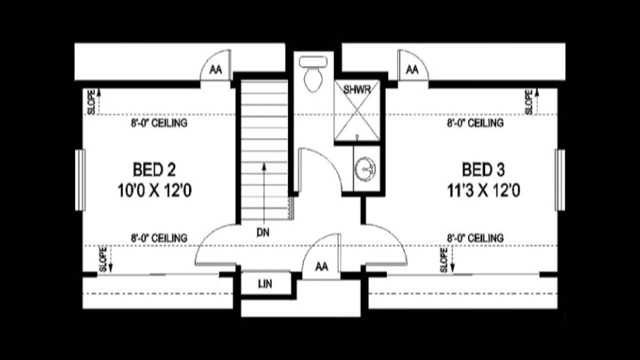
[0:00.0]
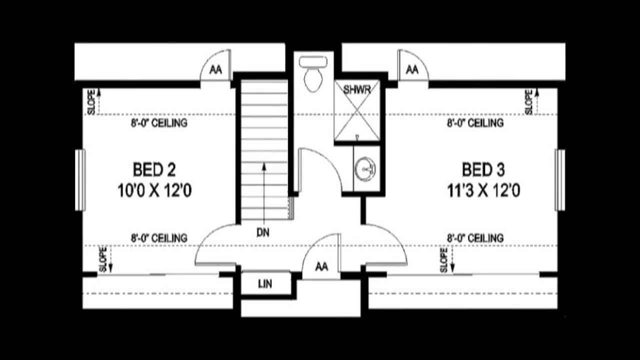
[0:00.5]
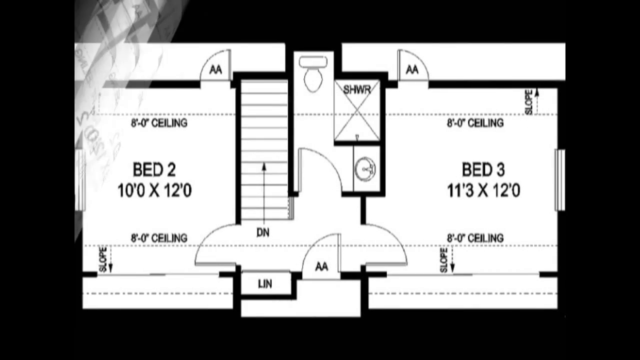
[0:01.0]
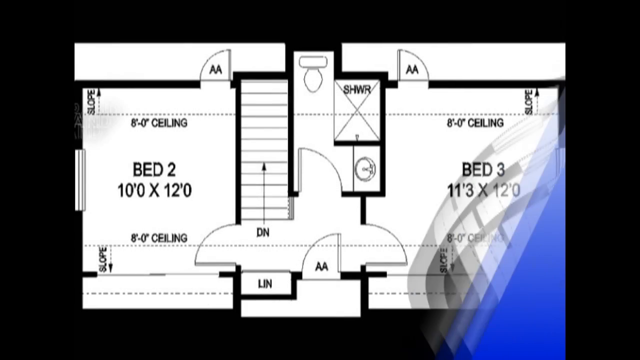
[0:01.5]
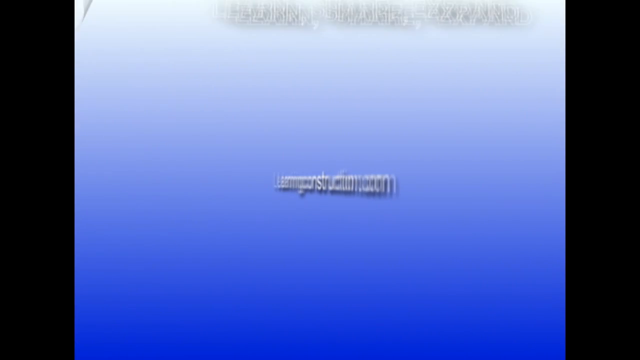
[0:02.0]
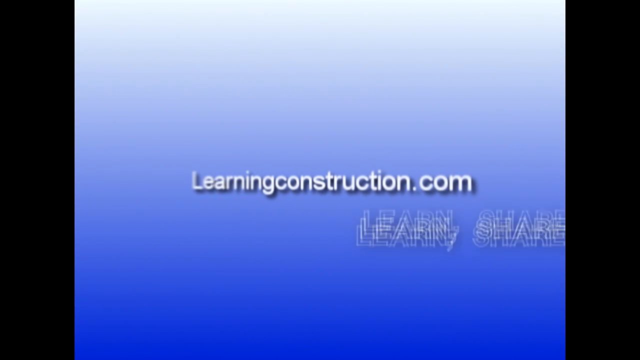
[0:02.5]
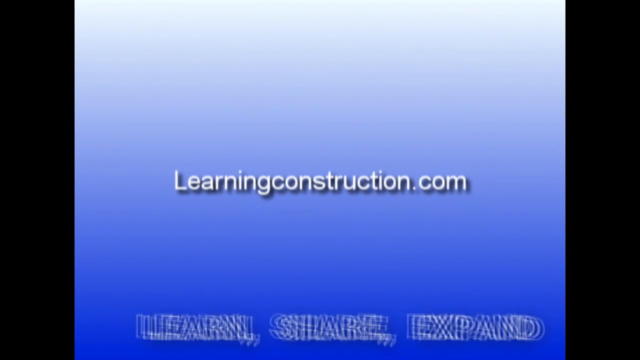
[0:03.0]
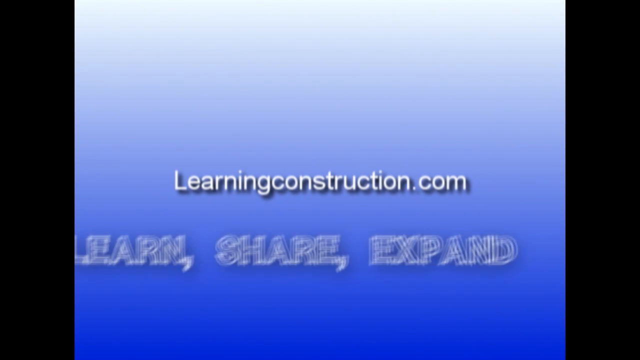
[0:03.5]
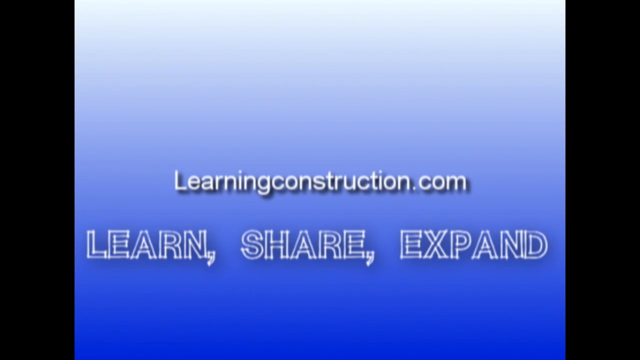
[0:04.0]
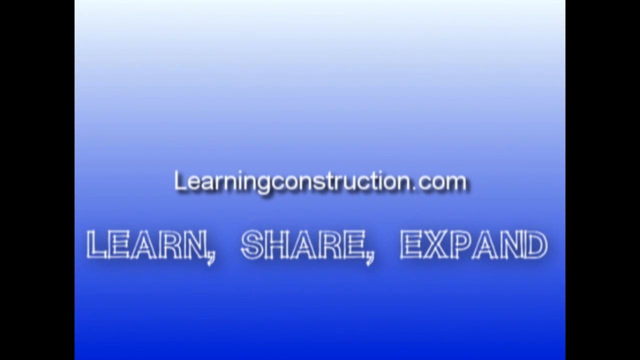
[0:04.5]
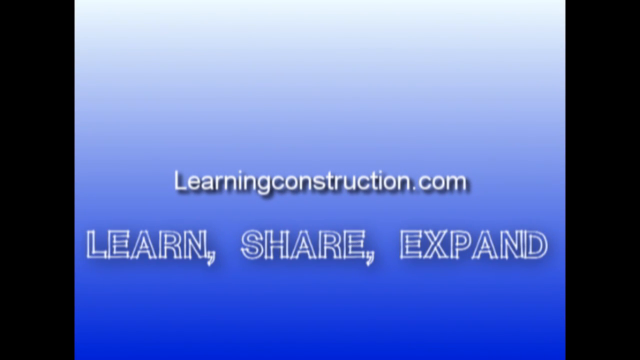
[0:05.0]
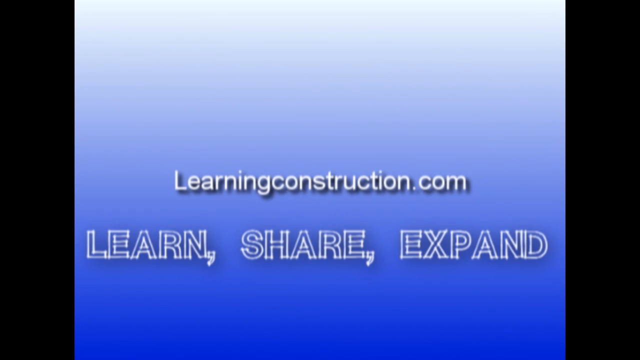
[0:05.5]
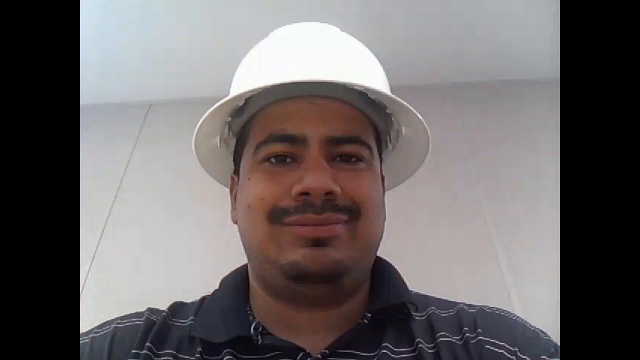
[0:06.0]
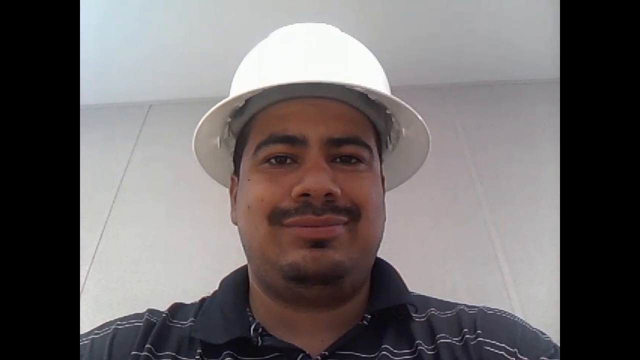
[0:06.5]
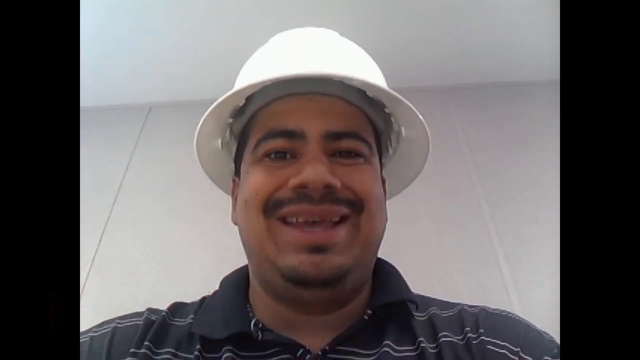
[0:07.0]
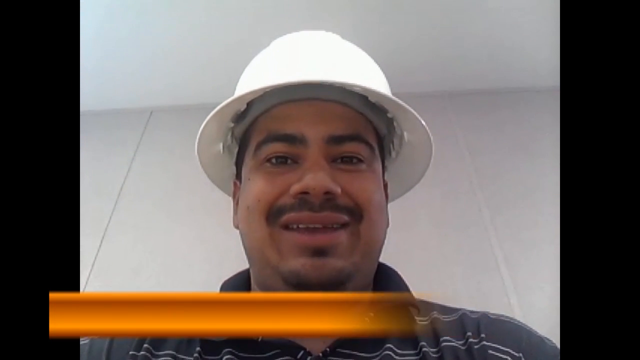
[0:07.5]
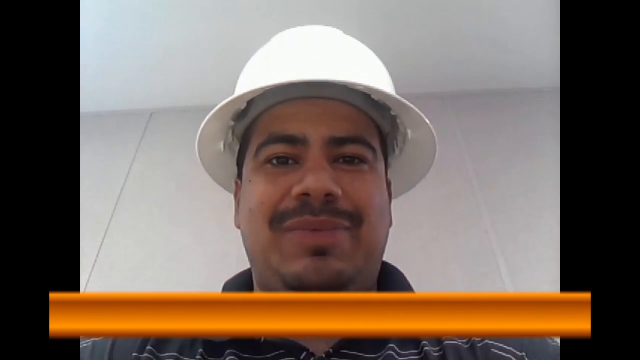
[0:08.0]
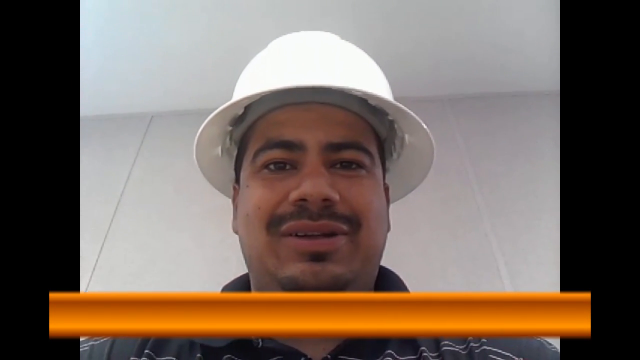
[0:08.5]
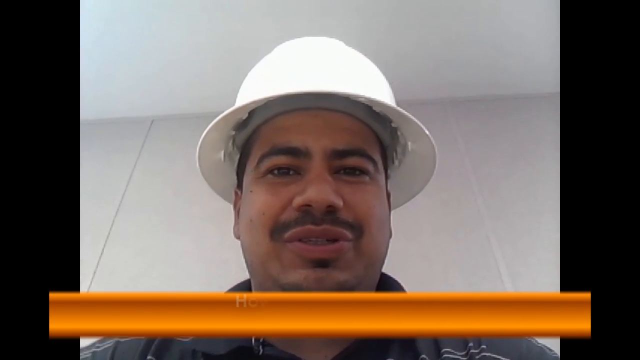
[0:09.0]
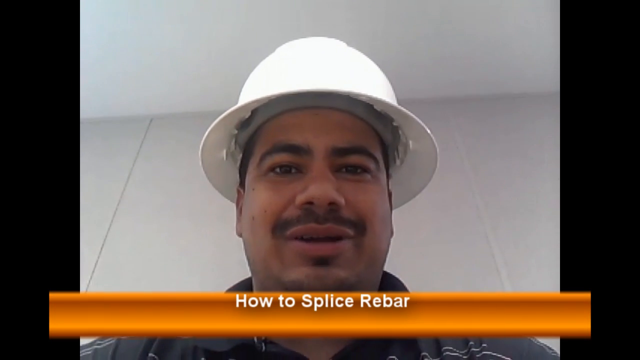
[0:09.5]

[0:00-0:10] A black-and-white blueprint of some sort of building opens the video, with black lines on white, though the majority of the screen is black. Rooms are labeled "Bed 2" and "Bed 3", there is a toilet diagram and something like a bathroom, and arcs mark where the doors are. A page-turning transition leads to another blueprint that is slightly revised from the first. The same transition happens again, revealing a mostly blue field that gradates from a very light white at the top to an almost black blue at the bottom, darkest at the bottom. A rotating line of text reads "LearningConstruction.com", and underneath it a line of text that sort of circles around it reads "Learn, Share, Expand" in outlined capital letters. A sharp cut shows a man's face; it looks like he is holding his own phone. He smiles and talks into the camera as if addressing the viewer. He has a mustache, dark eyebrows and dark eyes, wears a white hard hat and what looks like a dark shirt, and is in a room with a white wall behind him and a white ceiling. Because he holds the phone up at his face, the point of view is somewhat from below his face and the image is a little jittery. An orange bar then appears at the bottom of the screen with the text "How to Splice Rebar."